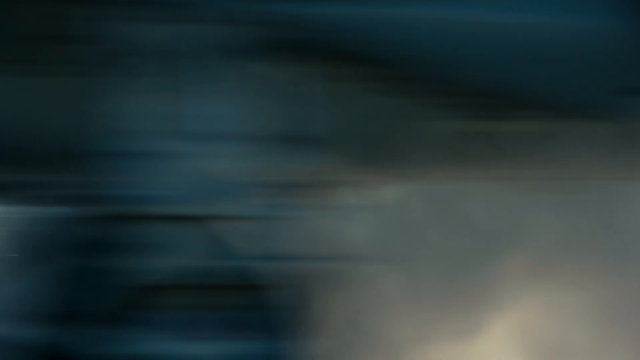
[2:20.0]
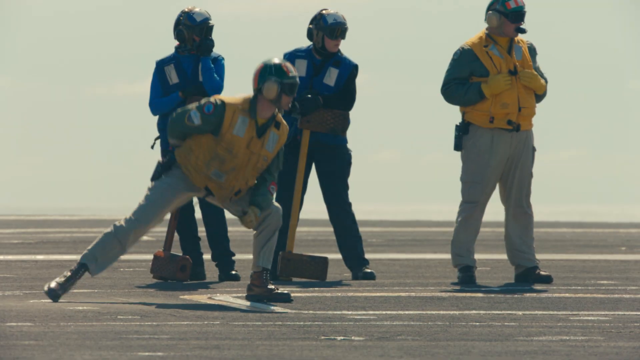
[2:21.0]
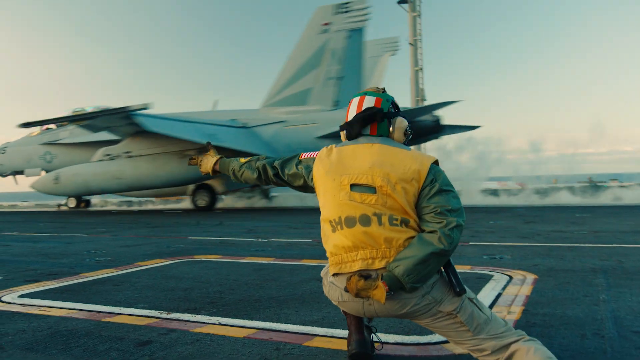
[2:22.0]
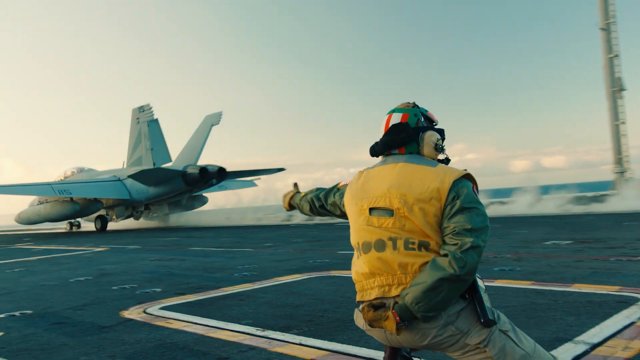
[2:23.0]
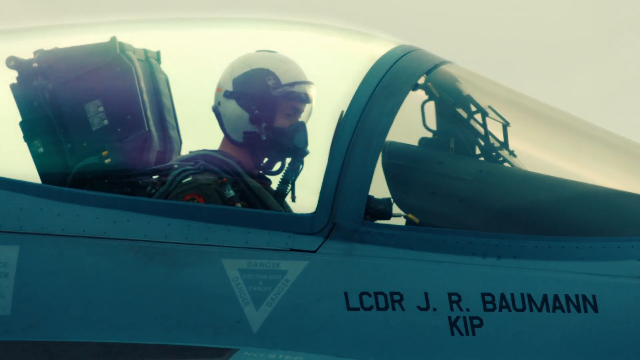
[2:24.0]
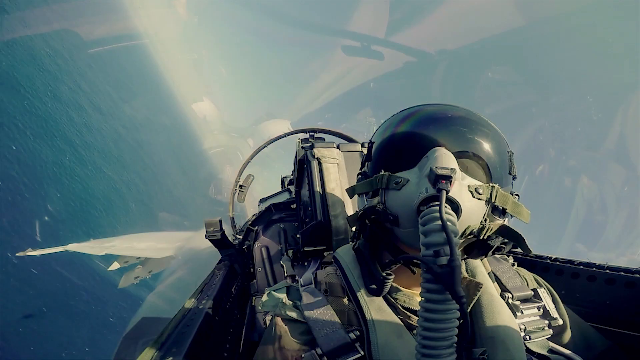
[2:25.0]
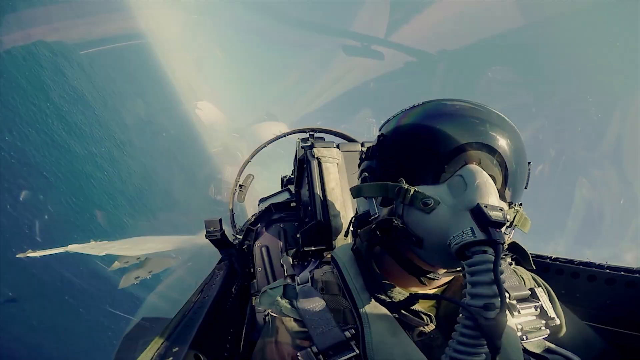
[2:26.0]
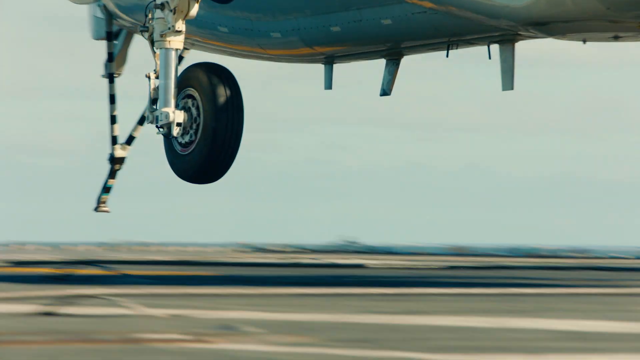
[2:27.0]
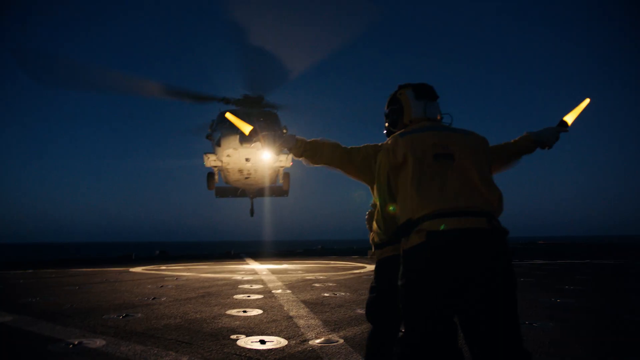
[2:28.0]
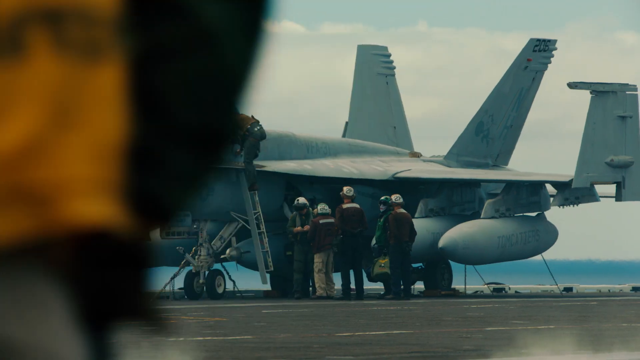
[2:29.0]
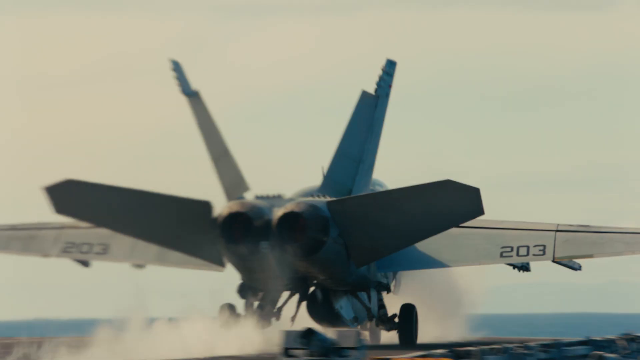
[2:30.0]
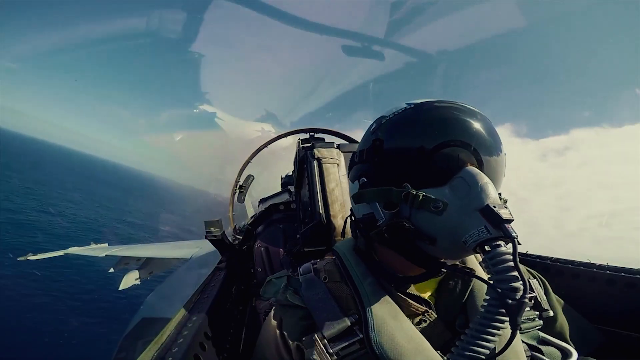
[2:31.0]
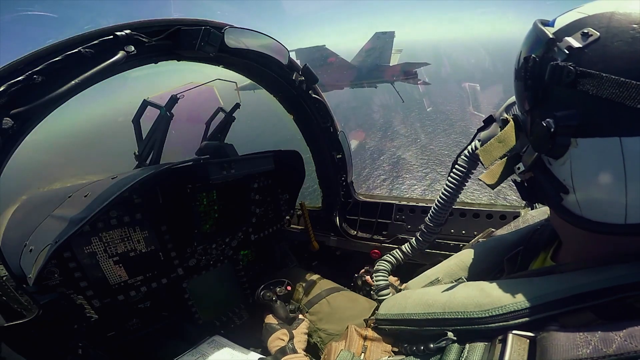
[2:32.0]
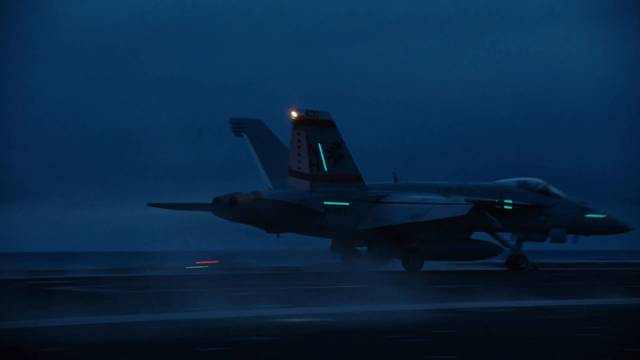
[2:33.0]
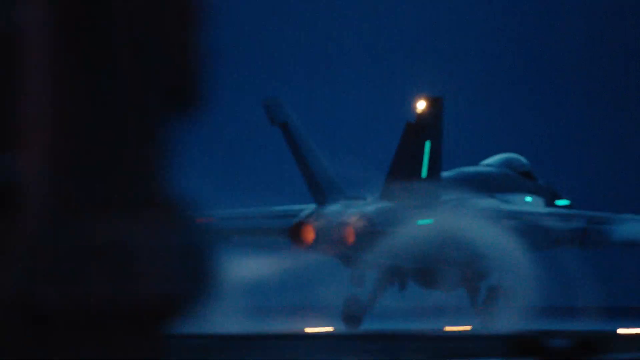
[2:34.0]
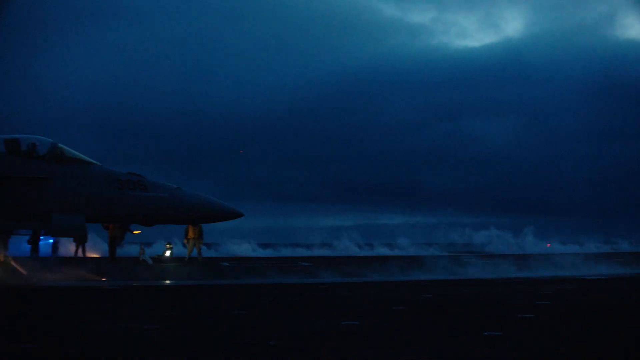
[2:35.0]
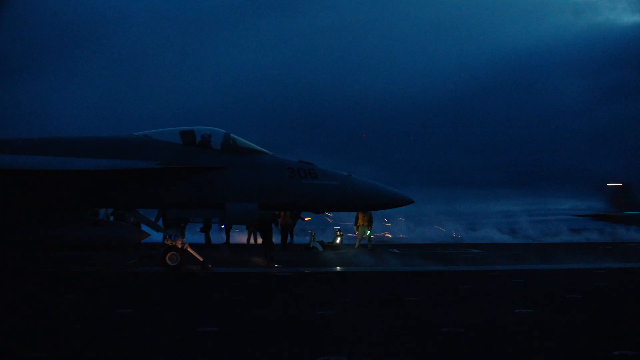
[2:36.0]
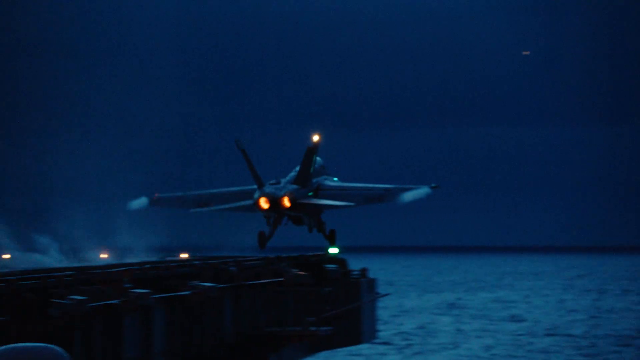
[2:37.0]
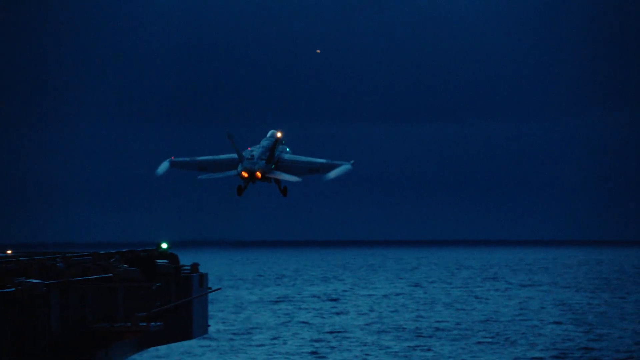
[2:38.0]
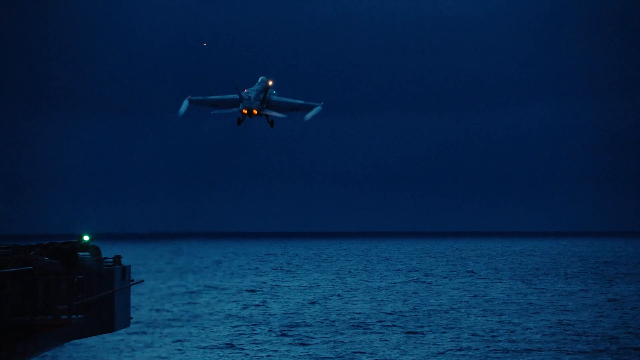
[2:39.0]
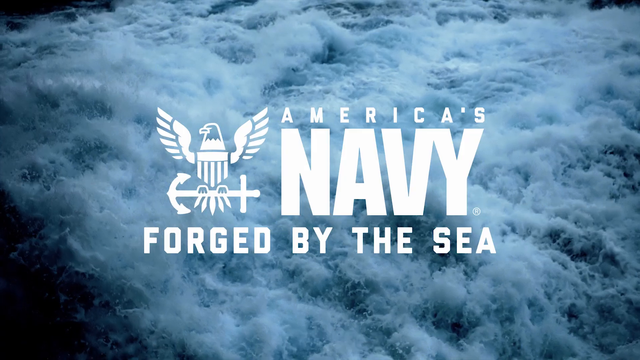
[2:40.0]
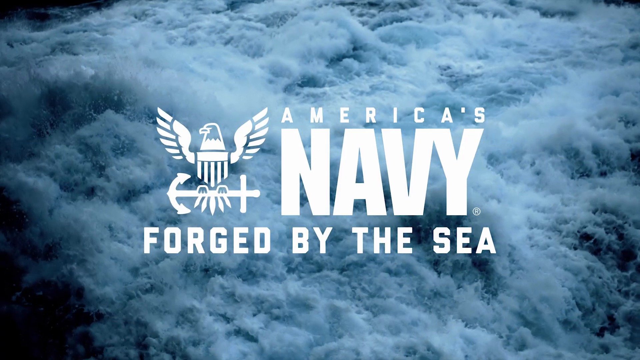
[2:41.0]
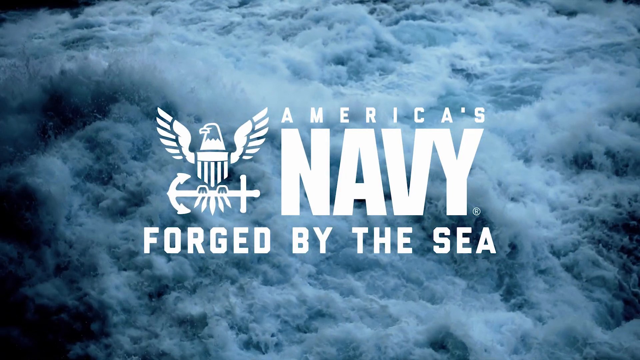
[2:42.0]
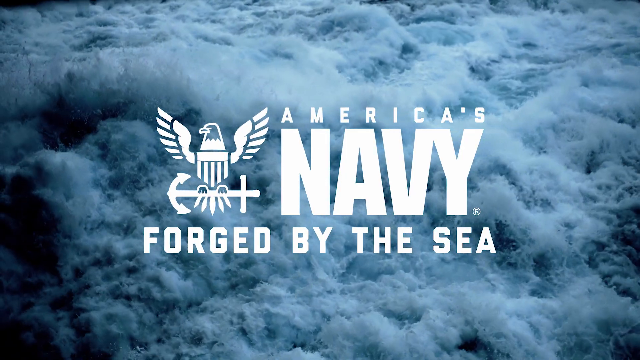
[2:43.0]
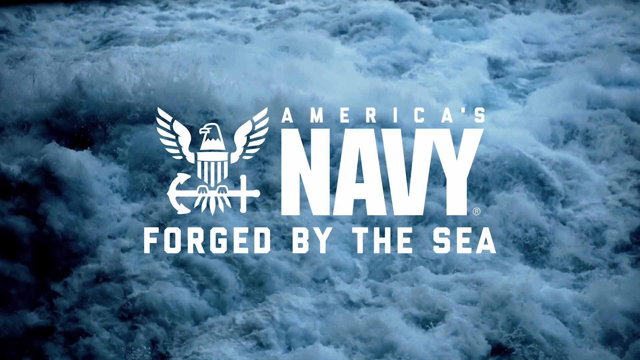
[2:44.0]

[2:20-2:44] A quick close-up shows a moving plane that obscures the entire screen; behind it, another controller is getting out of that same position, with a few others beside them. Another person in that position is seen from the back, arms pointing out toward the left, as a plane takes off in front of them. A close-up shows a pilot inside a plane, followed by several quick images of planes in various stages of flight and a close-up of someone flying inside the plane. A plane is in the air, a plane lands, and a plane lands at night while an aircraft controller gestures to it. A group of aircraft controllers stands next to a plane, followed by a close-up of a front wheel again and a shot of the plane taking off. Inside that plane, the pilot is shown first from the front and then in profile, with a ship or another plane out in front and the ocean below. Several more shots show planes taking off or landing, followed by that same position with one knee bent, one leg straight and the right hand pointing out toward the right. Several rapid-fire images show planes taking off or landing at nighttime, with flashing lights from both the planes and the aircraft controllers. One plane takes off into the night across the ocean. The video ends on the same churning water with white text over it reading "America's Navy forged by the sea", and above the word "forged" on the left is an image of an eagle sitting on a sideways anchor.